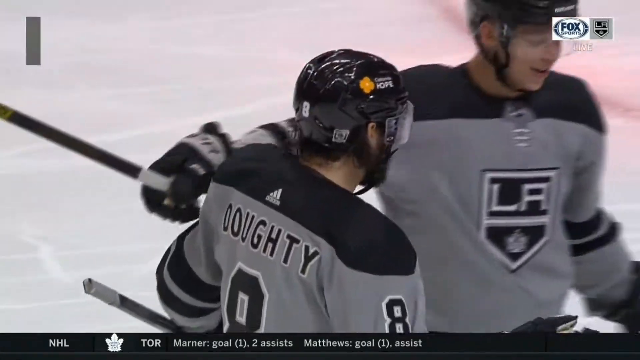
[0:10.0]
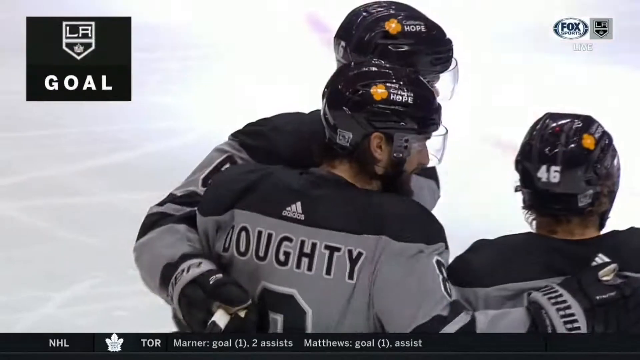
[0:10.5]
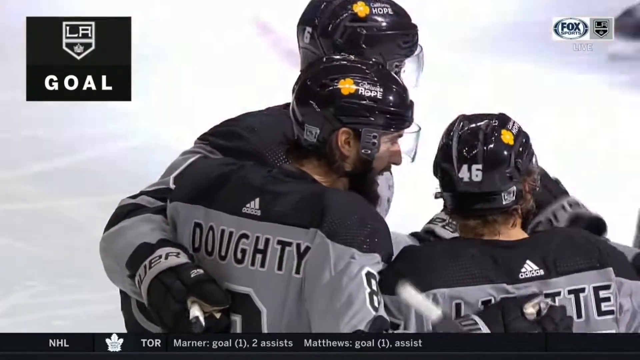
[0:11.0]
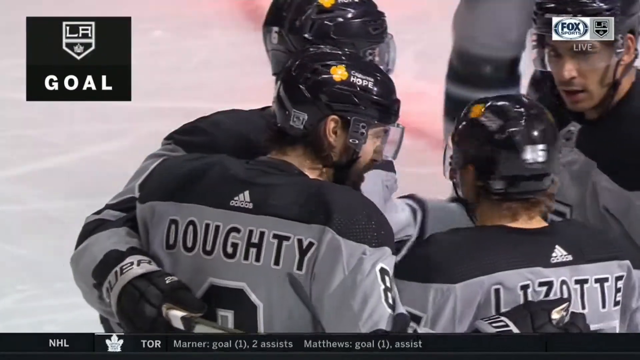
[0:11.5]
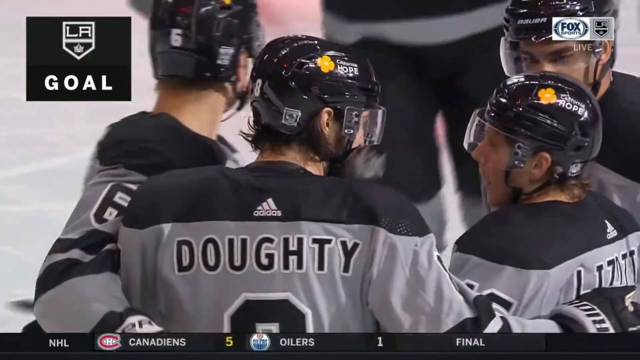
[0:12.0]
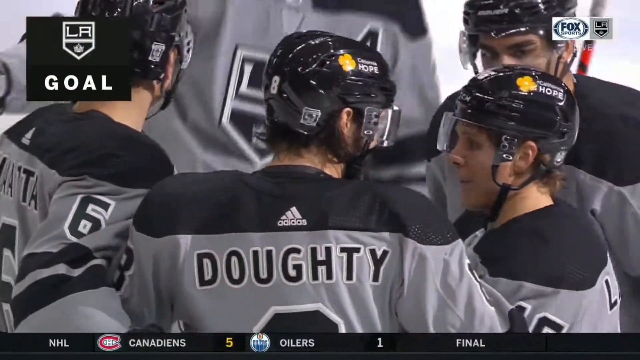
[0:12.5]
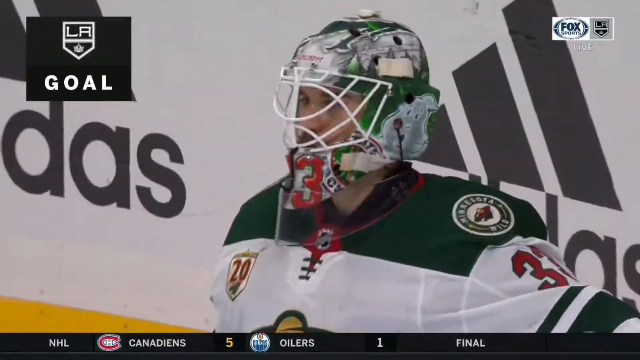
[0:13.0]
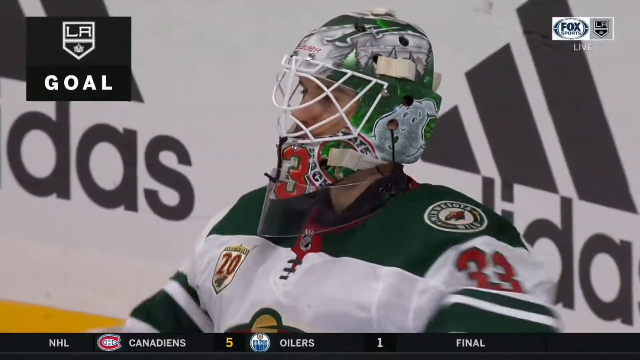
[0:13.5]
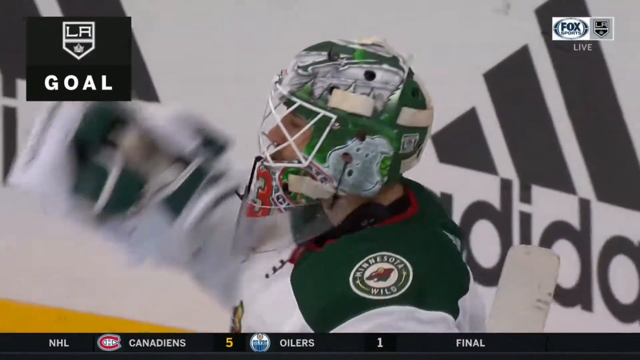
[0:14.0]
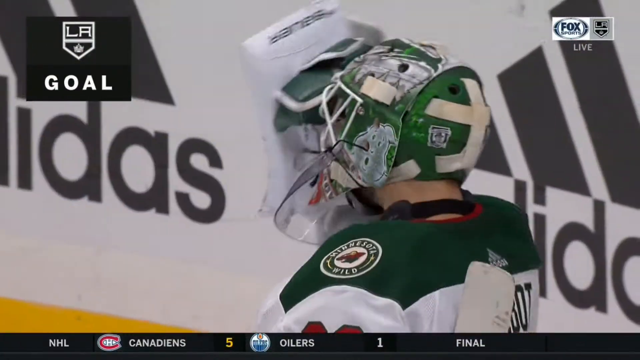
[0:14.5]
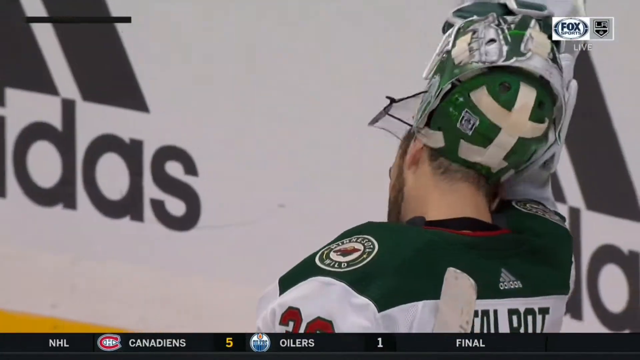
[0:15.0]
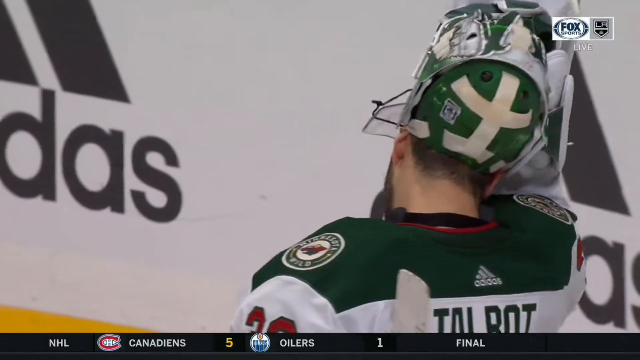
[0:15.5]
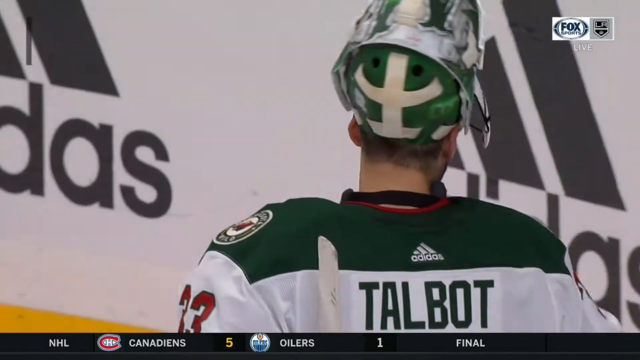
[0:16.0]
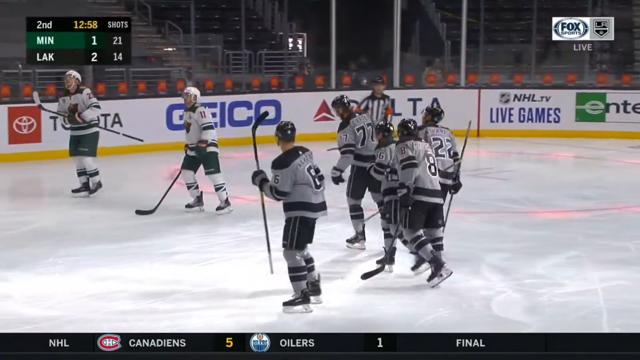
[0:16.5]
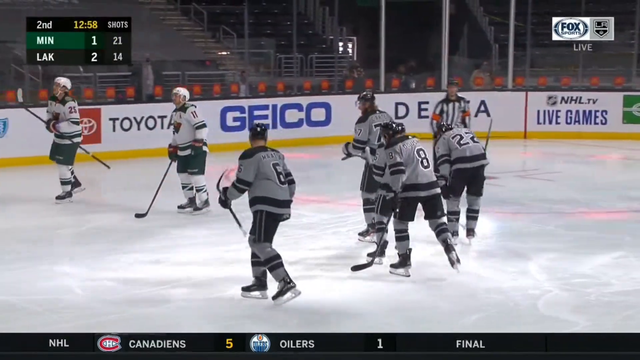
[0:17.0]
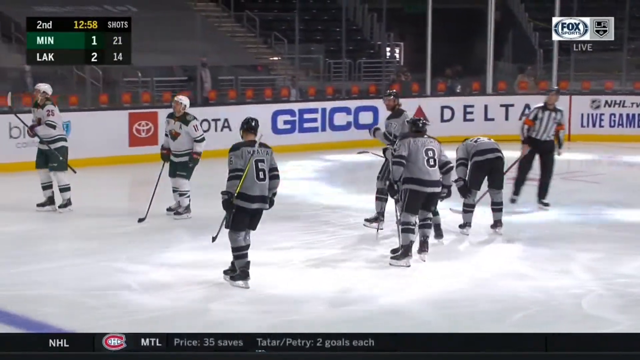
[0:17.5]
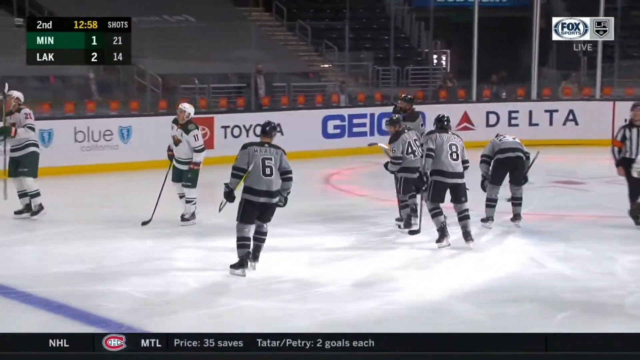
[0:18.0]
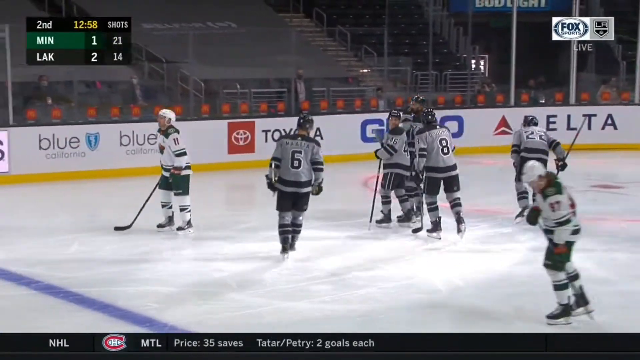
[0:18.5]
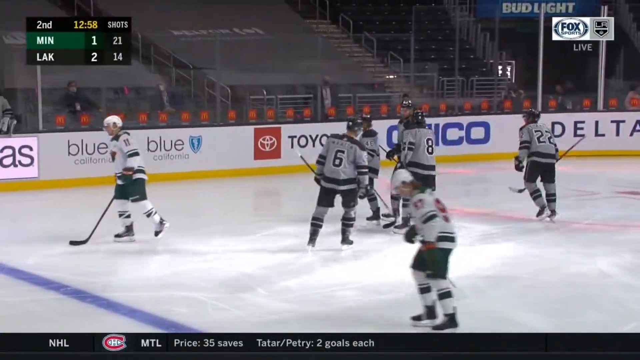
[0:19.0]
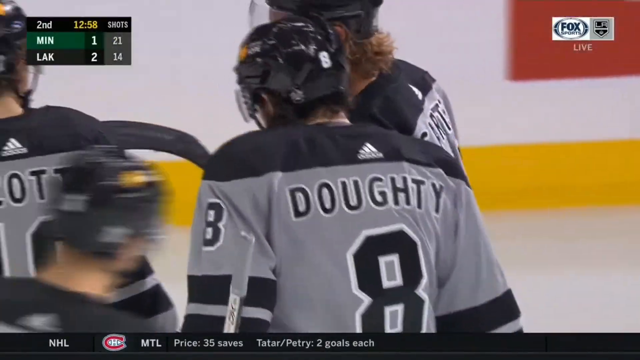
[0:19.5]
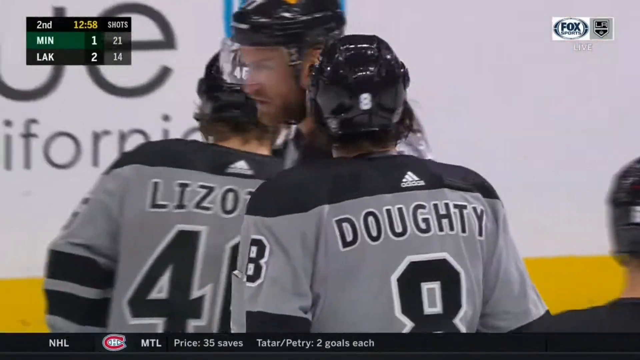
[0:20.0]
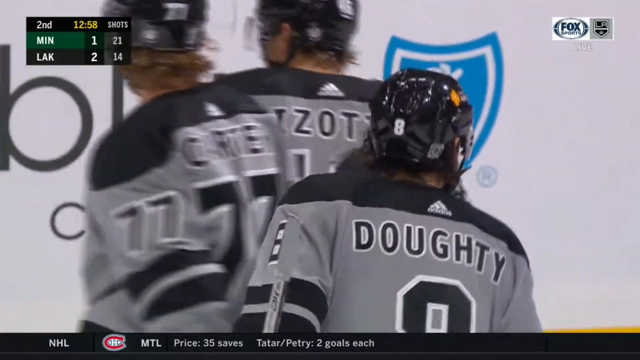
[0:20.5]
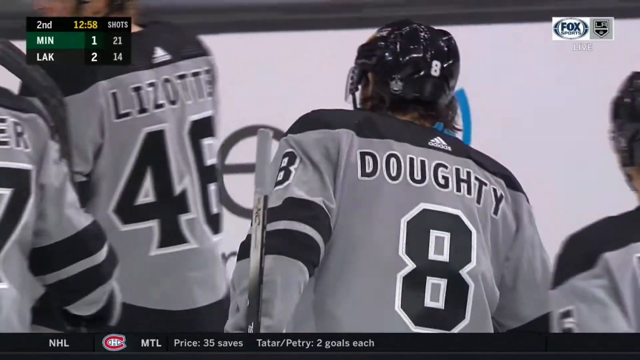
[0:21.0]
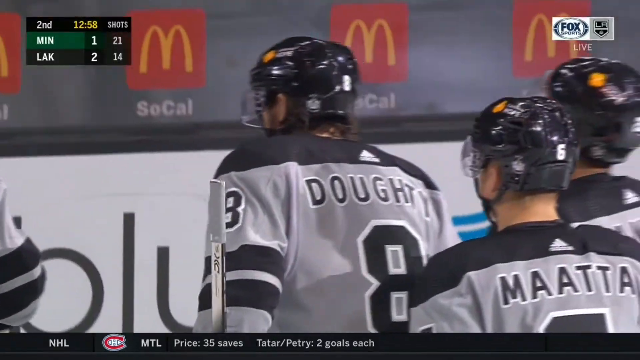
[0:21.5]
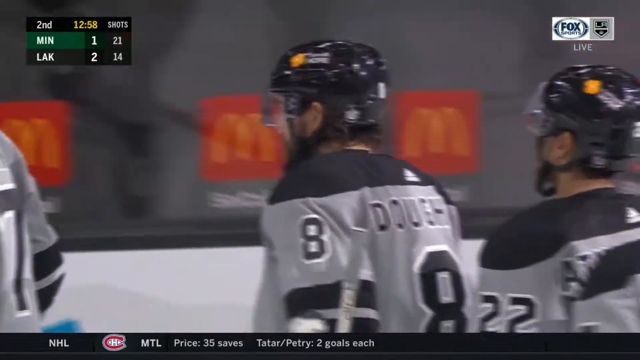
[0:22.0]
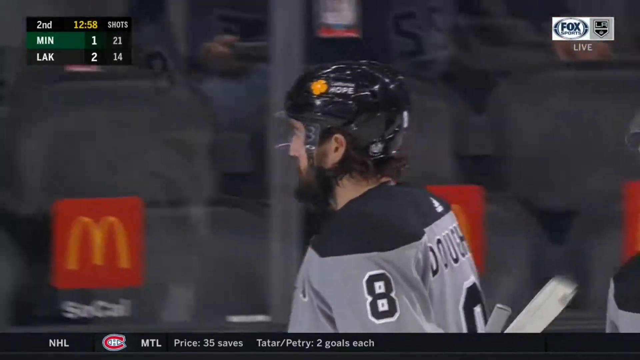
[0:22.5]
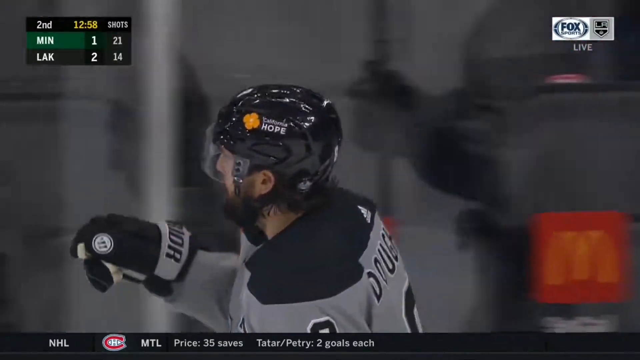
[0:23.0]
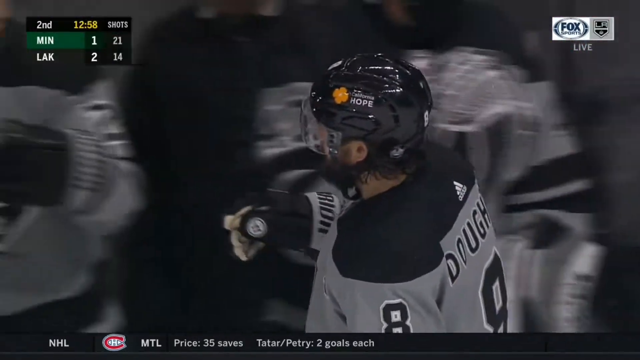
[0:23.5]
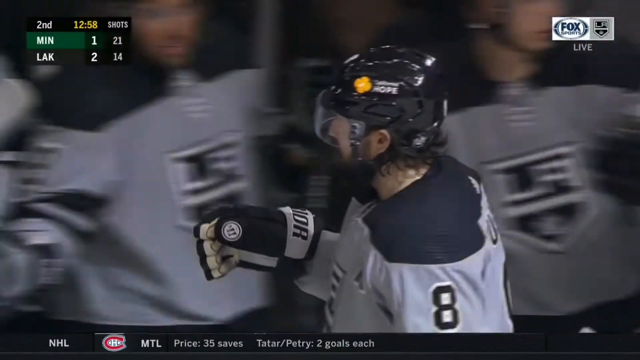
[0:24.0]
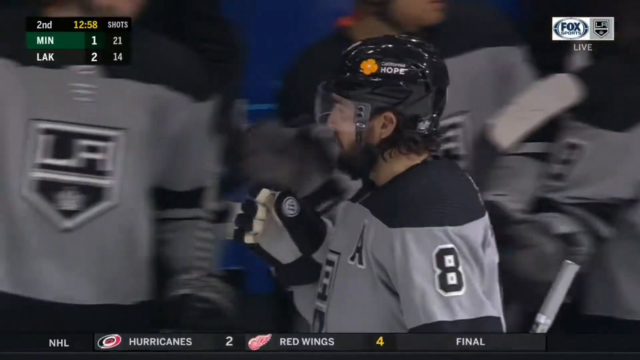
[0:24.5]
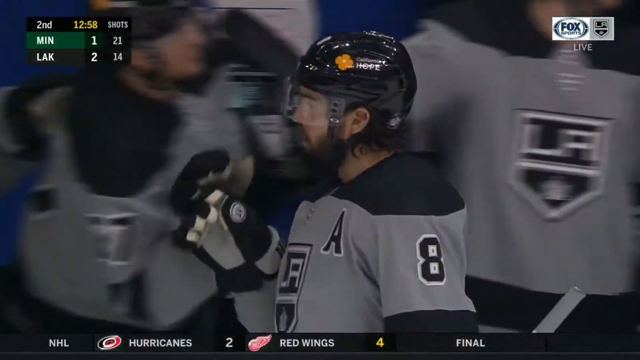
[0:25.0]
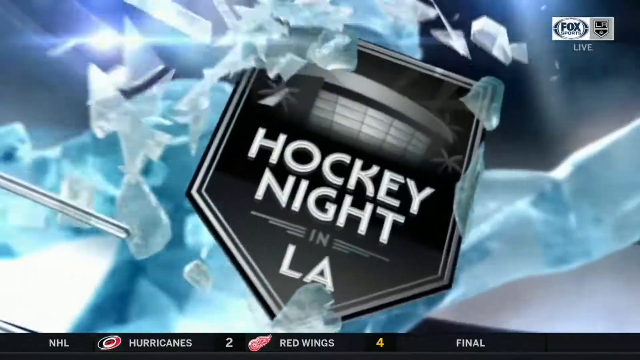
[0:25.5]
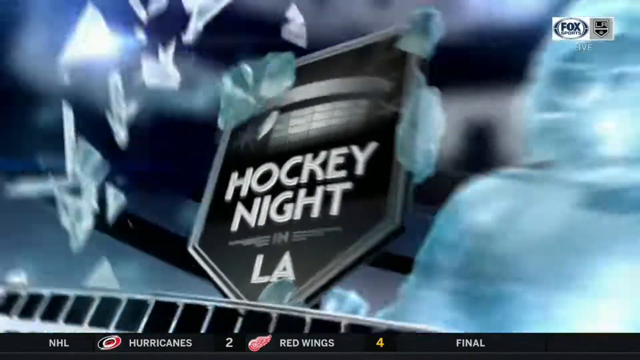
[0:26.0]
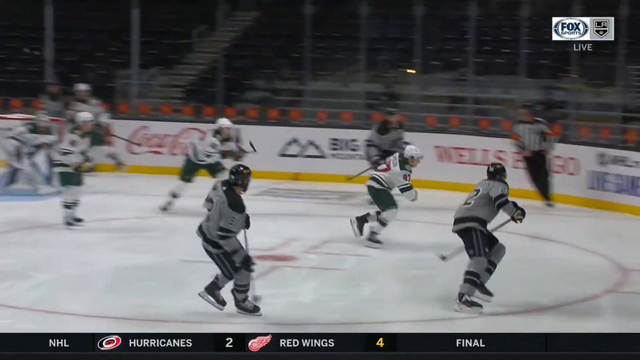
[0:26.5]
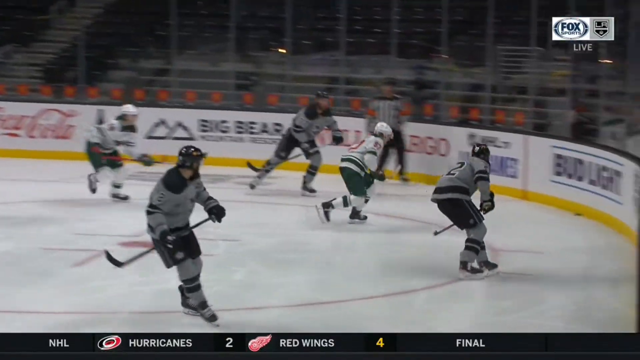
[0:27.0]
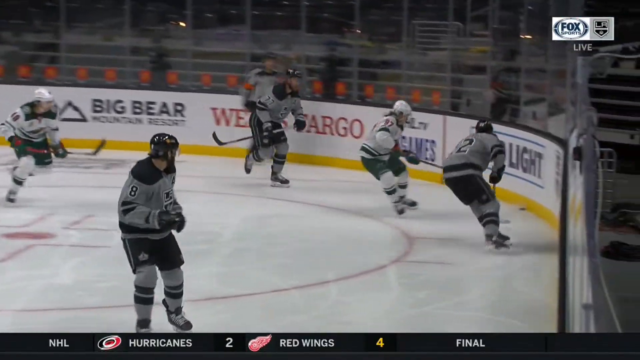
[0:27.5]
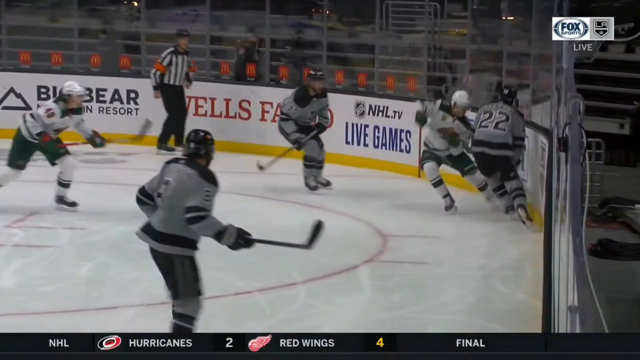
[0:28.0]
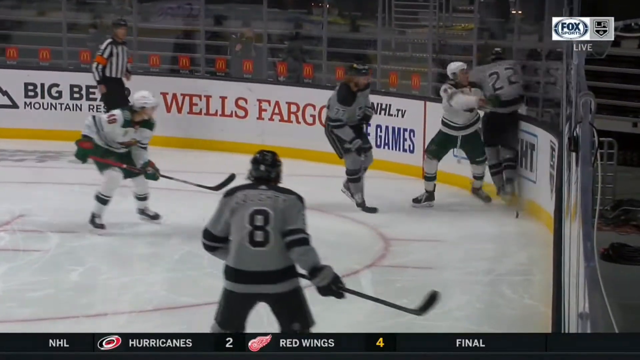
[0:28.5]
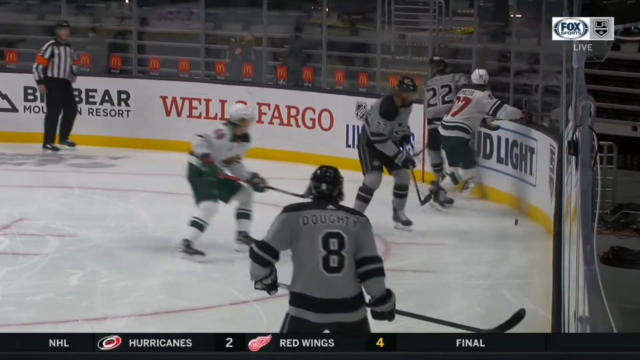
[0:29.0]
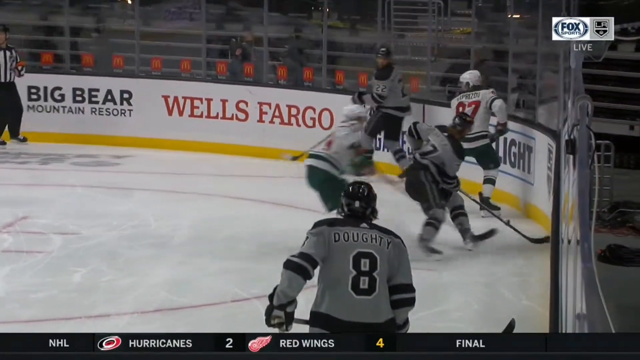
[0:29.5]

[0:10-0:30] After the goal, the grey team huddles together: five players gather, greeting each other and facing forward. The lights themselves are not visible, but their effect shows on the white of the ice: red and white lights flashing in a circle. A goal symbol flashes up in the top left corner of the screen. The game is in the second quarter, and the score looks like Minnesota 1, Black 2, with 12 minutes 58 seconds on the clock. In the top right corner is a Fox promotional image. Just before the replay, a graphic reading "Hockey Night" comes across the screen, in black with white writing and a blue background. The scene then cuts to a somewhat slowed-down replay of the goal, showing somebody being checked and pushed into the siding. The goalkeeper, disheartened, lifts his helmet off and turns away in disgust.